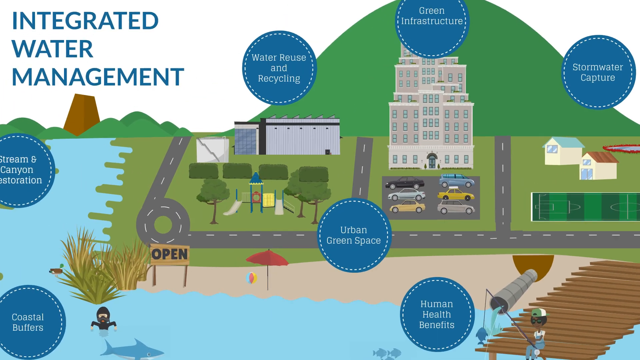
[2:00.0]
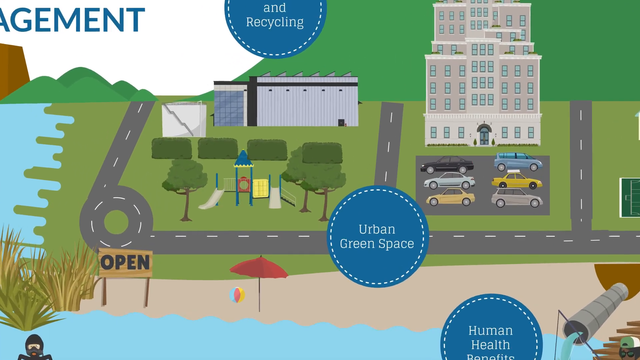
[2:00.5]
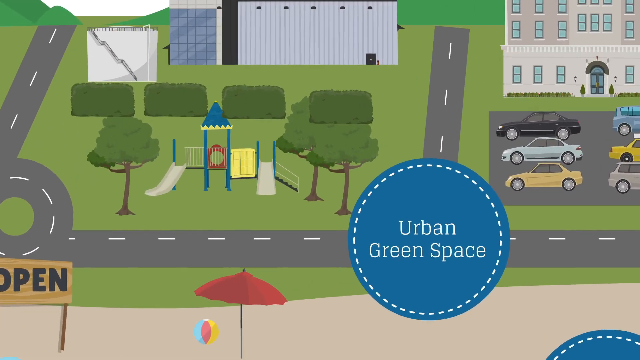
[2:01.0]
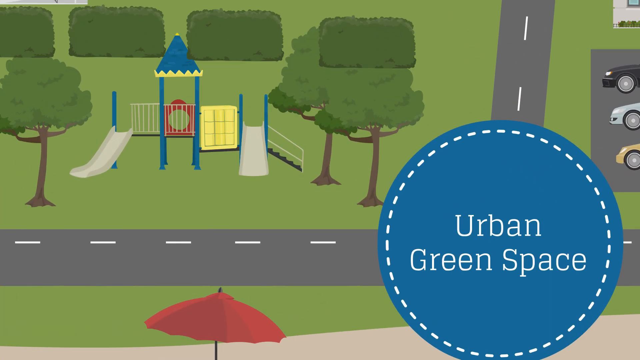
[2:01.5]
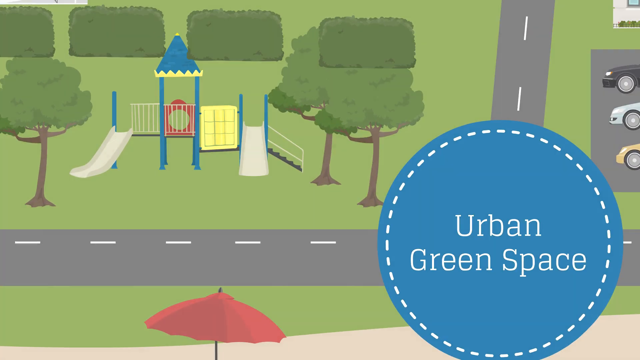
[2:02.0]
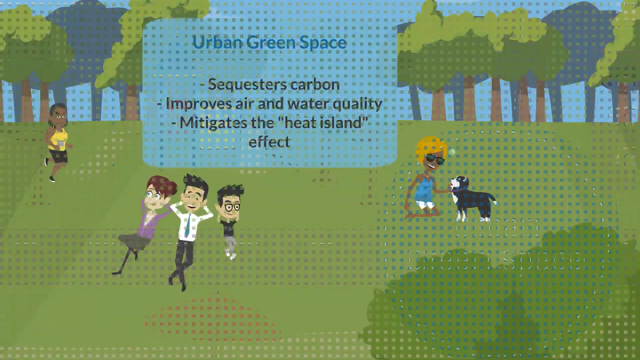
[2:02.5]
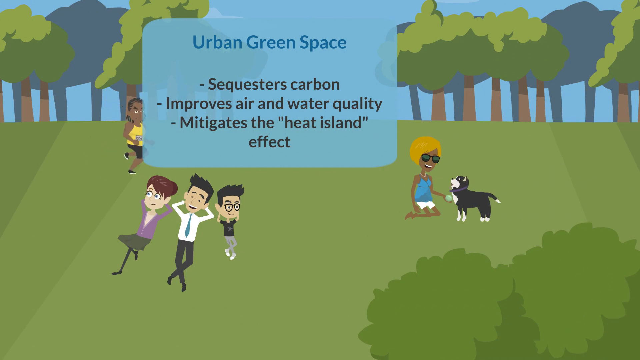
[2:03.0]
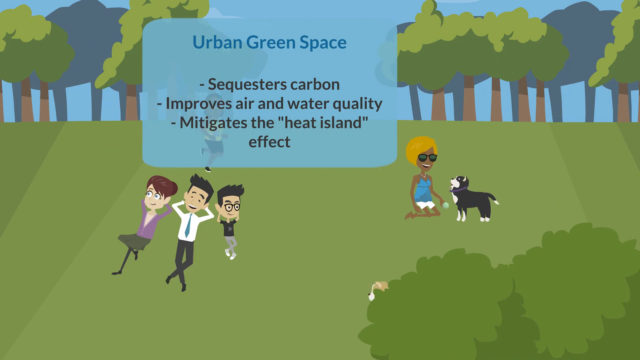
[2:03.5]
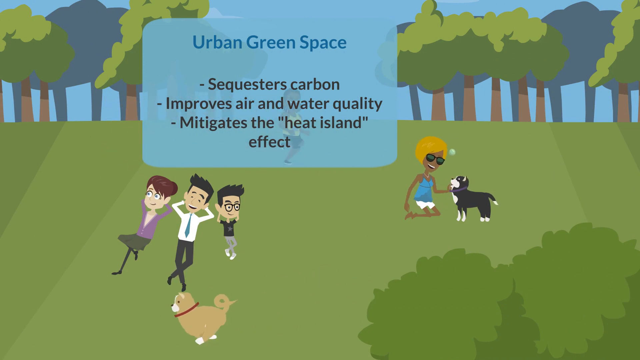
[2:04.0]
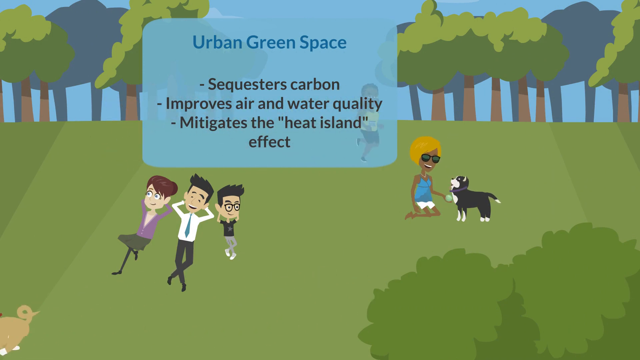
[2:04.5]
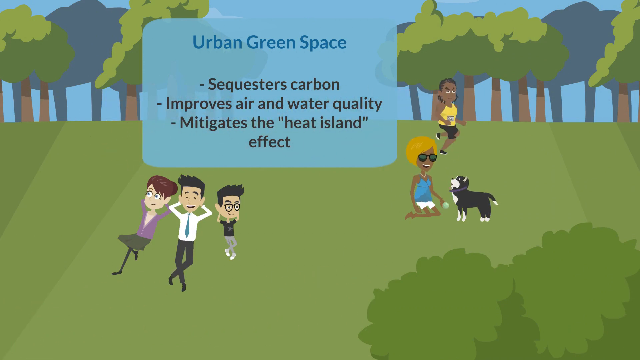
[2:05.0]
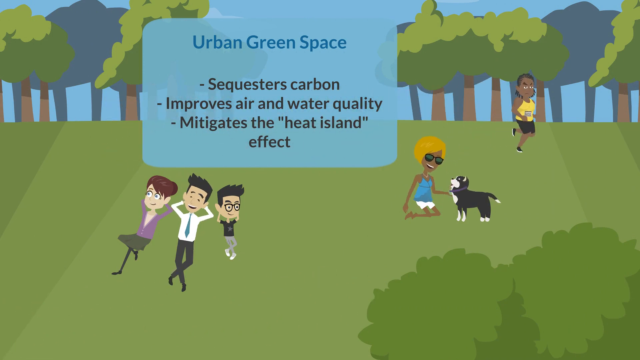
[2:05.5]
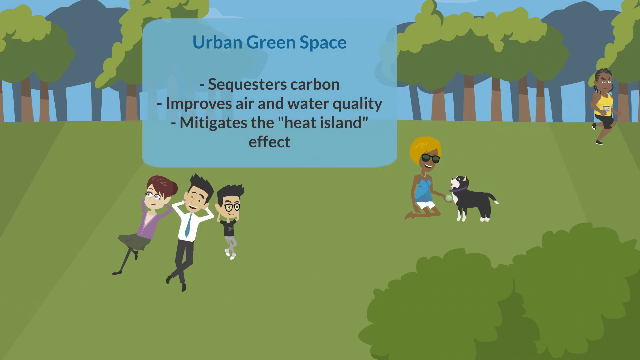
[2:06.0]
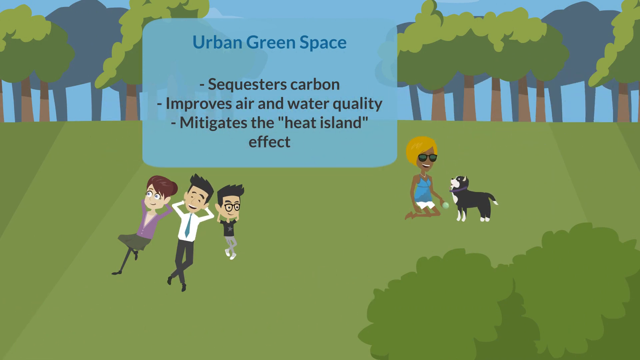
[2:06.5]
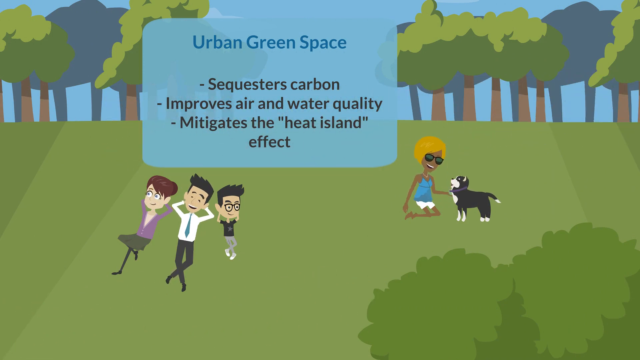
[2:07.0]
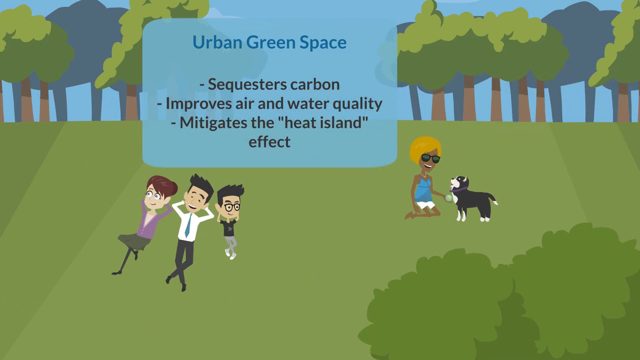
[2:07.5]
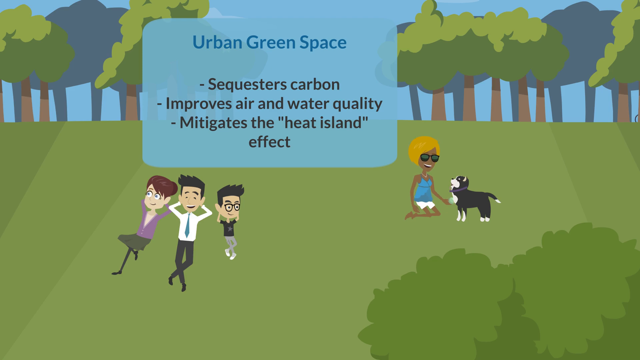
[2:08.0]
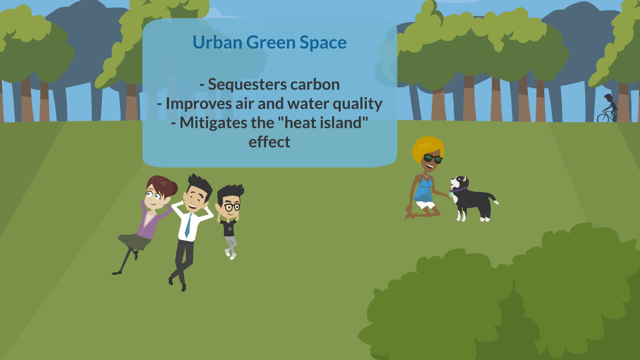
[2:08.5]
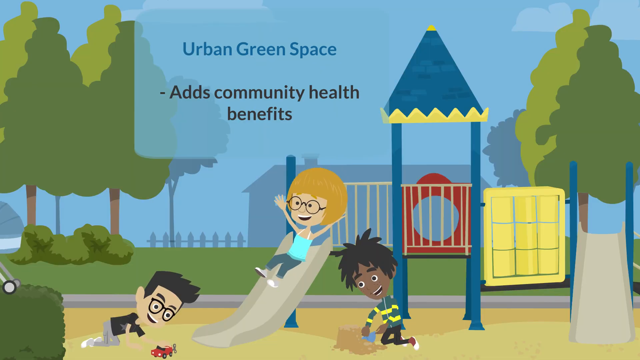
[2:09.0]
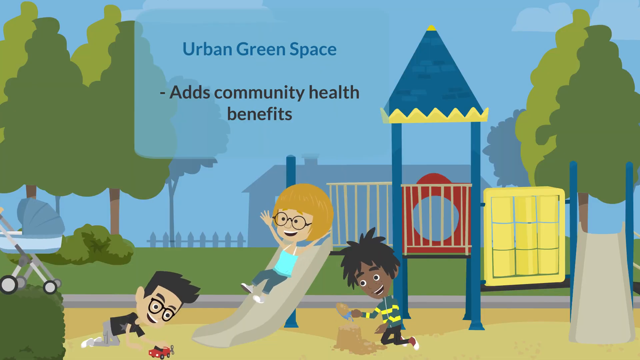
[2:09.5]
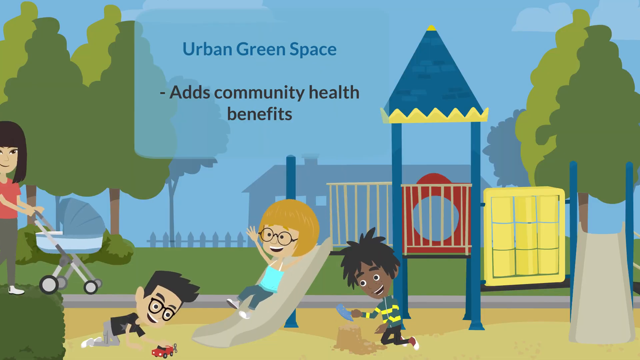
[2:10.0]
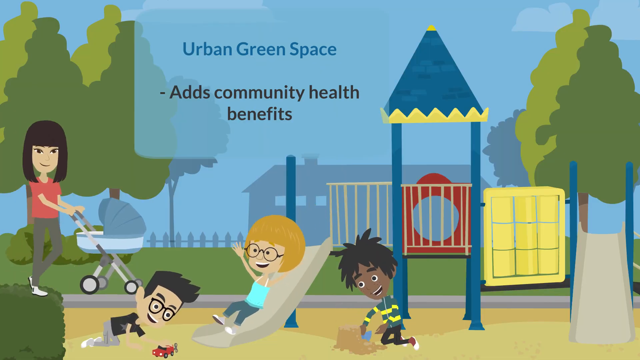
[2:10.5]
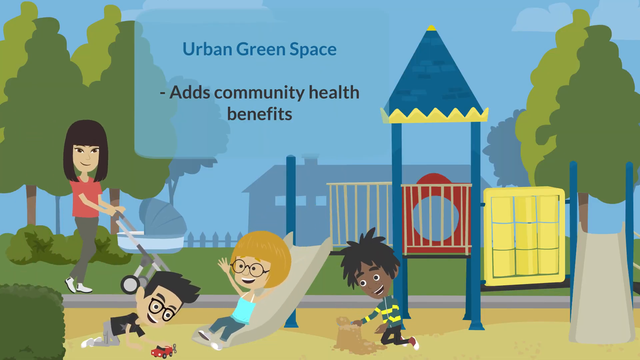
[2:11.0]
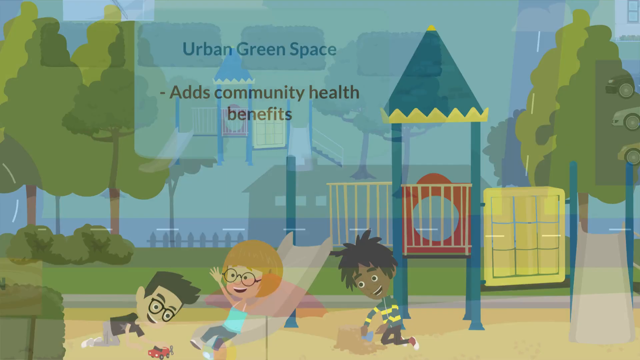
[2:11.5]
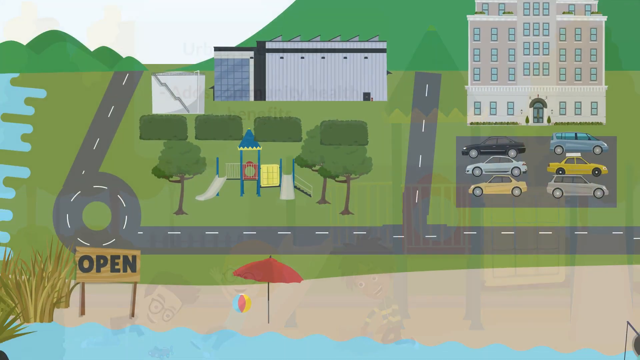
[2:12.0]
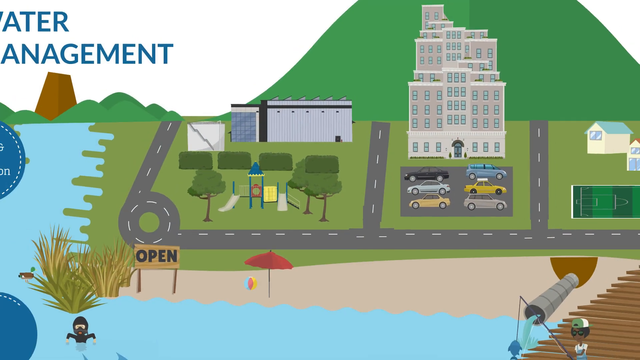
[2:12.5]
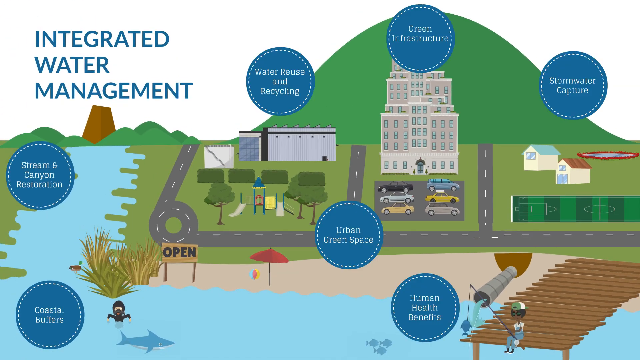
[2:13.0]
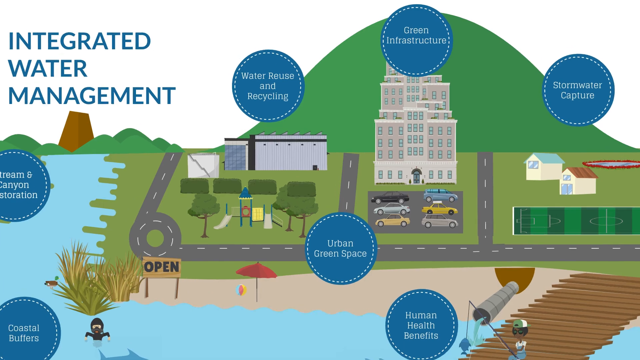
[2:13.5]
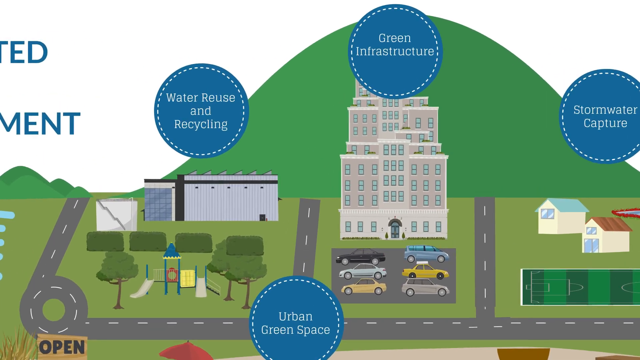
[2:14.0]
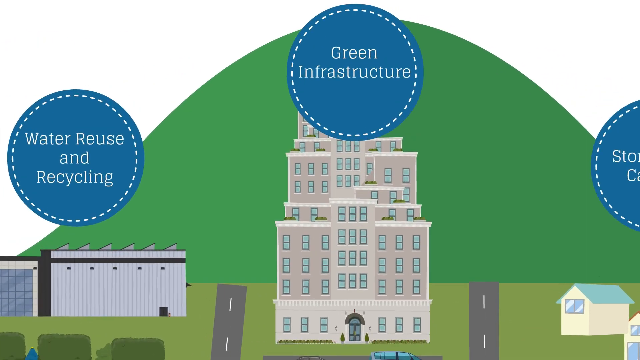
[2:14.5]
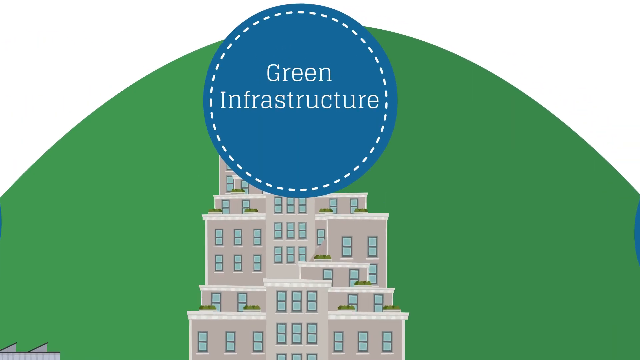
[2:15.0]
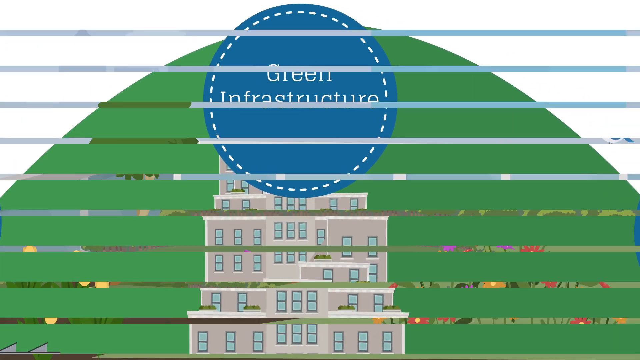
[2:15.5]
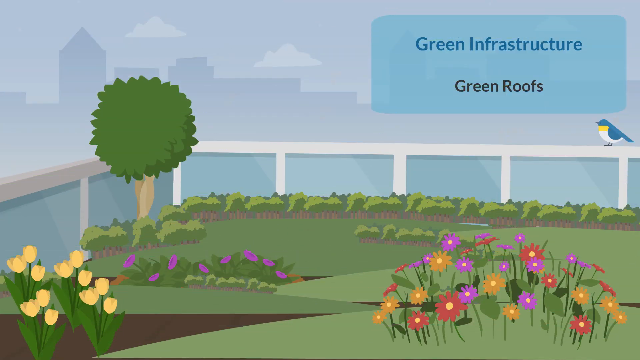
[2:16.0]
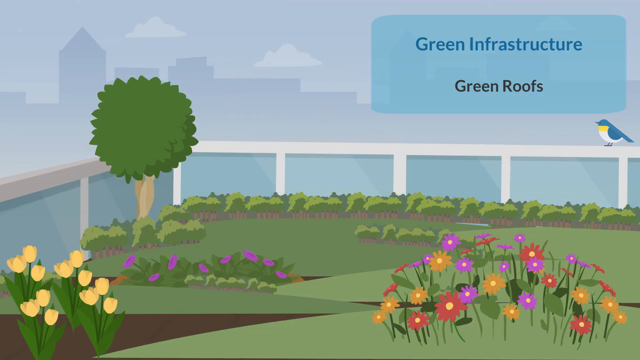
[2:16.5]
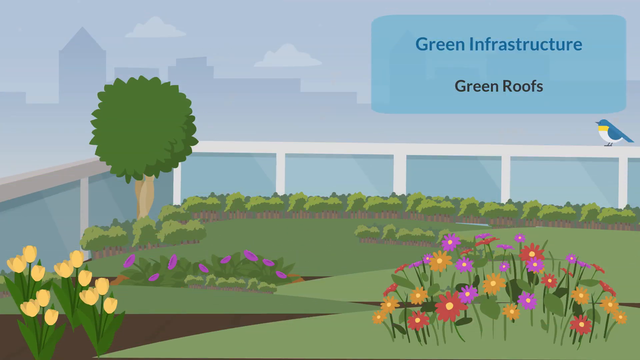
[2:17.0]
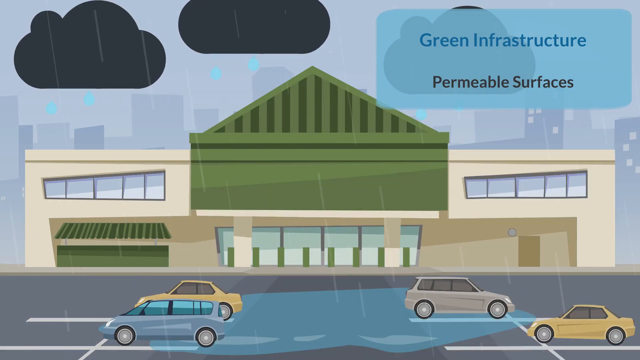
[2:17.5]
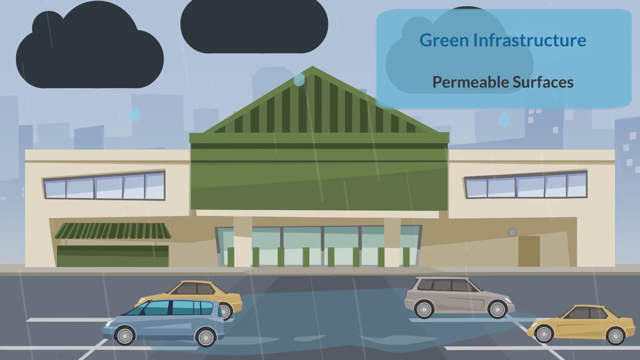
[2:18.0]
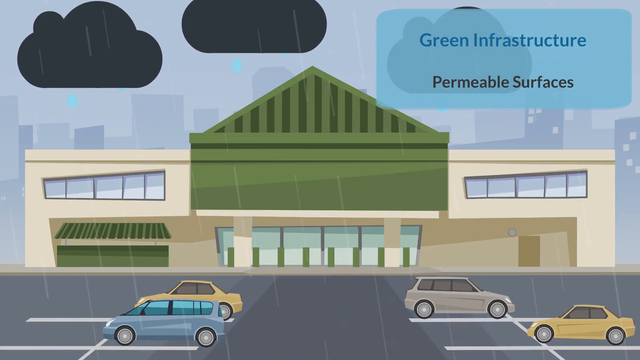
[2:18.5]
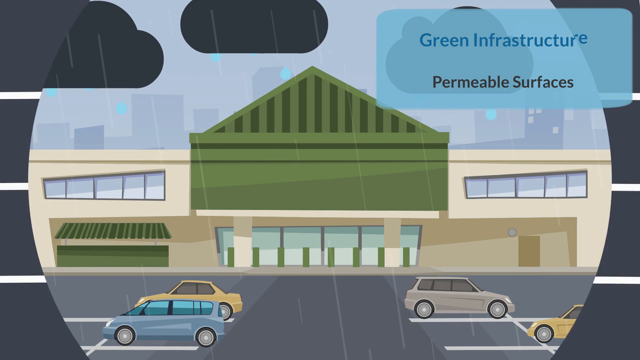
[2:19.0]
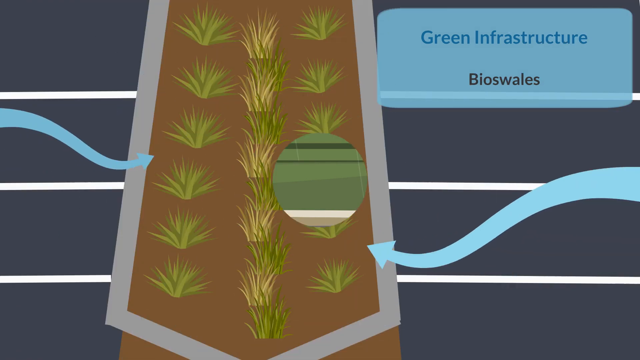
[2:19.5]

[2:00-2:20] "Urban green space" appears, opening on a park scene. A dog runs by, and in the background a woman runs or jogs by. Green trees surround the park. Three people lie on their backs on lush green grass with their arms behind their heads, looking up at the sky and talking amongst themselves; one of them looks like he might have just gotten off work and still has his tie on. A woman plays with her black and white dog, holding a ball up. Text reads "urban green space sequesters carbon, improves air and water quality, mitigates the heat island effect." A person rides a bicycle in the background between the trees. The scene cuts to a playground: a lady in the background walks by pushing her baby in a stroller, and three little kids play on the playground equipment. One little girl in the background slides down the slide, and the two other kids appear to be playing on the equipment as well; one plays with a red toy and the other appears to be playing in the sand.